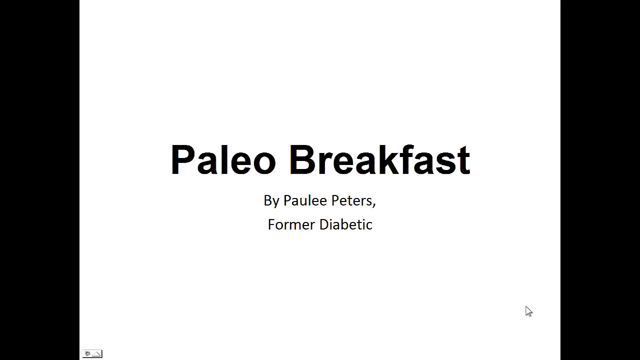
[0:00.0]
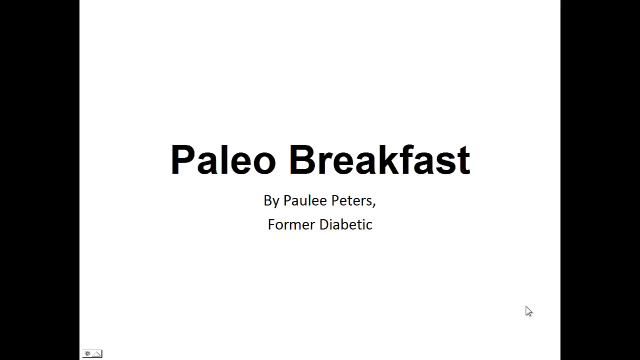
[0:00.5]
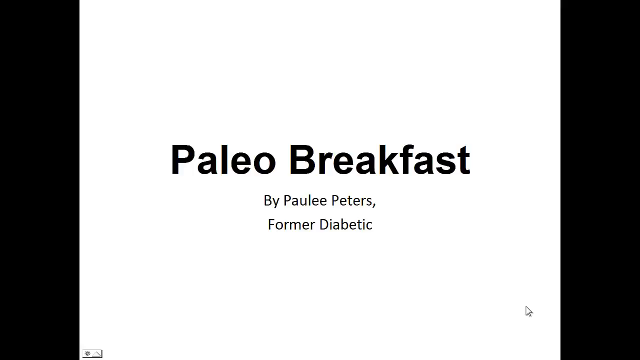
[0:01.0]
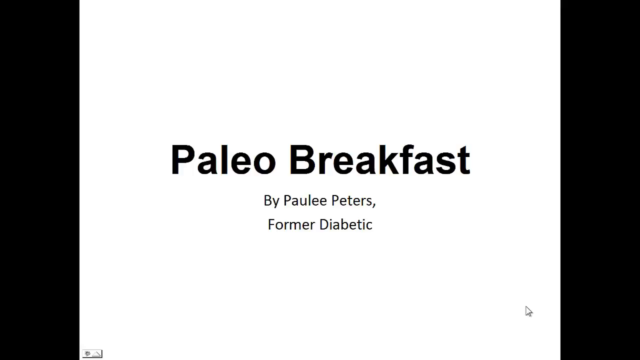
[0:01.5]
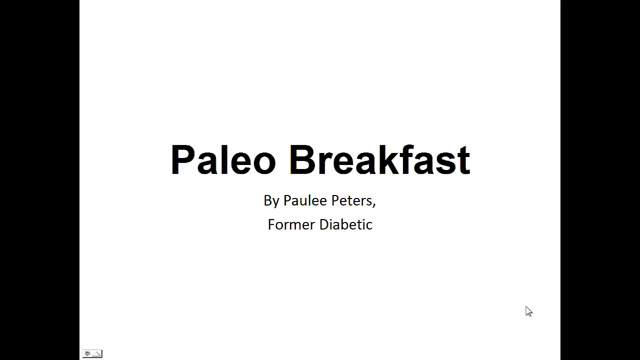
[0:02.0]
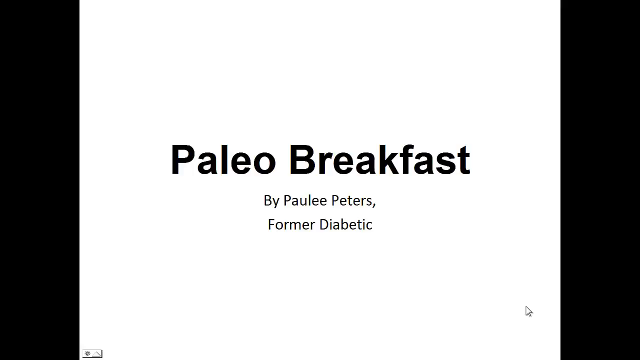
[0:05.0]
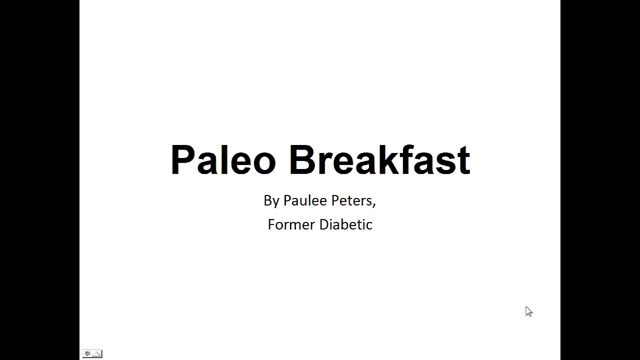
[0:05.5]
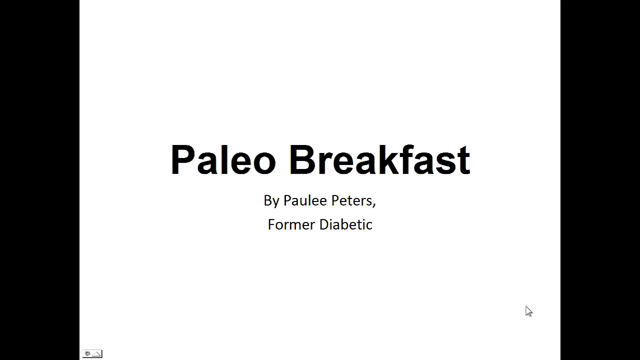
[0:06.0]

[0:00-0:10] Bold text reads "Paleo breakfast", followed by "by Paulee Peters", and under the name the words "former diabetic", neither in bold. The text is on a white background, and the screen looks like it is minimized, with a black background behind the white one. A white cursor is at the bottom right. A small rectangular box is in the bottom left corner, apparently containing a home sign with what looks like a recycling sign on the side.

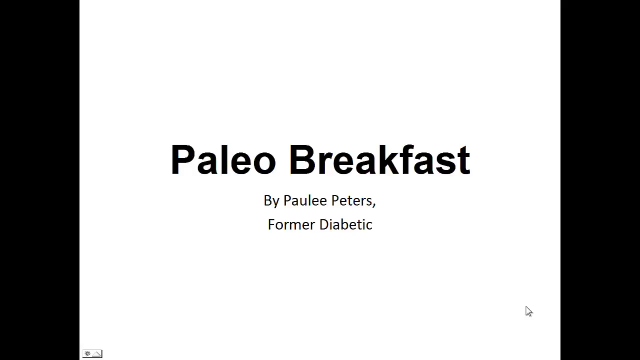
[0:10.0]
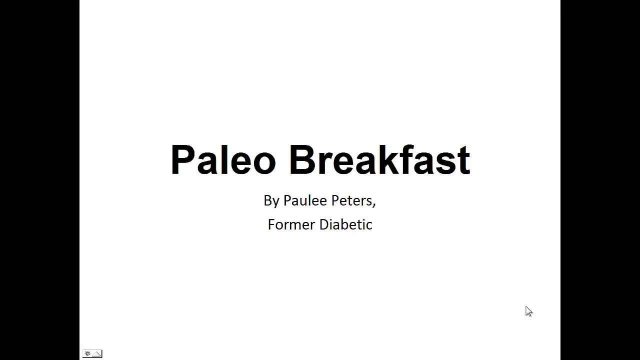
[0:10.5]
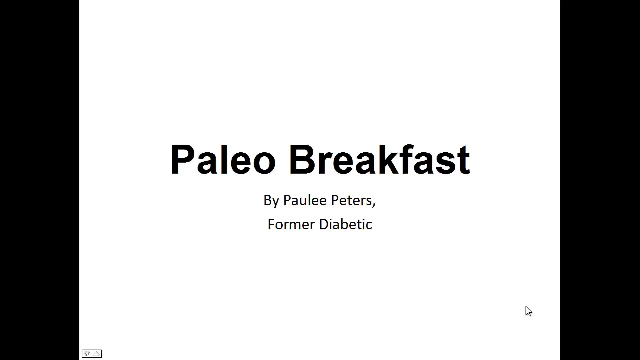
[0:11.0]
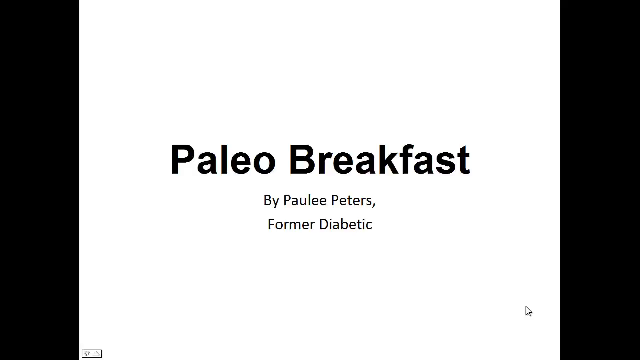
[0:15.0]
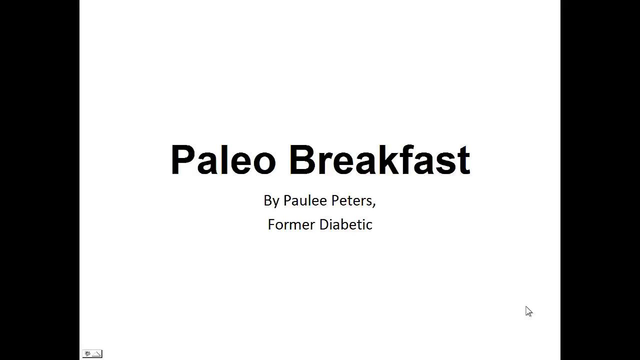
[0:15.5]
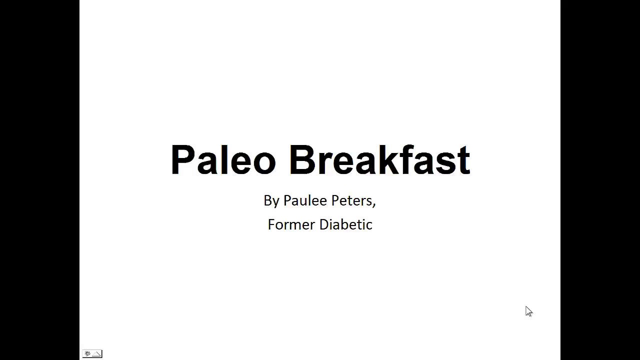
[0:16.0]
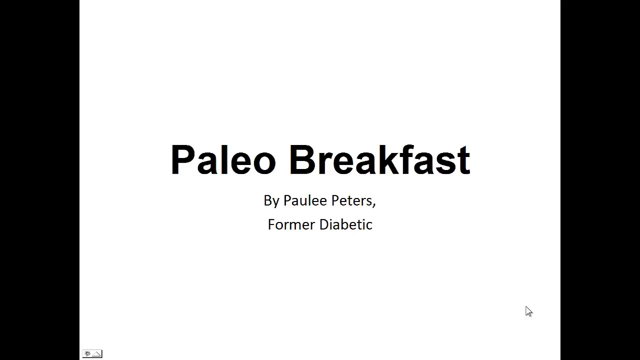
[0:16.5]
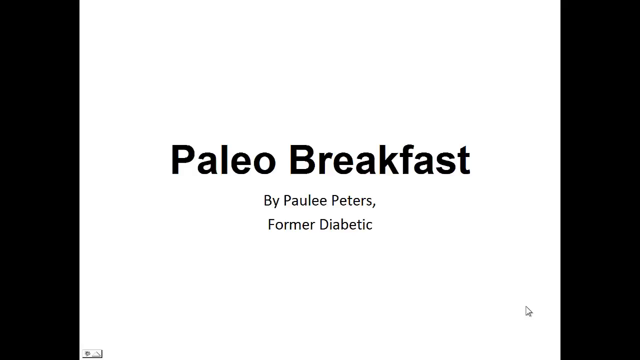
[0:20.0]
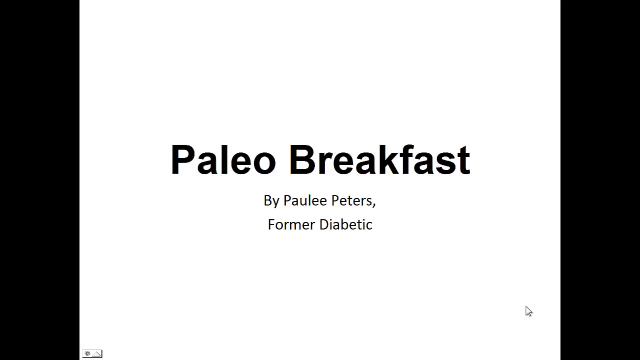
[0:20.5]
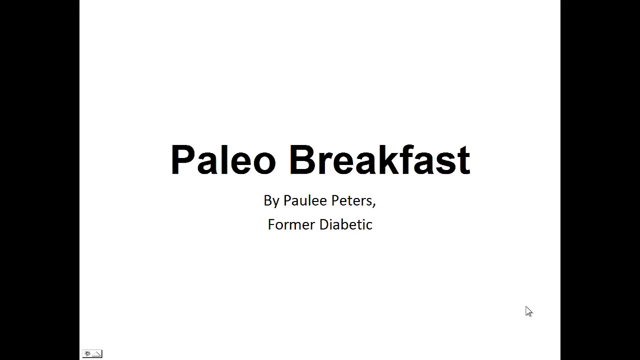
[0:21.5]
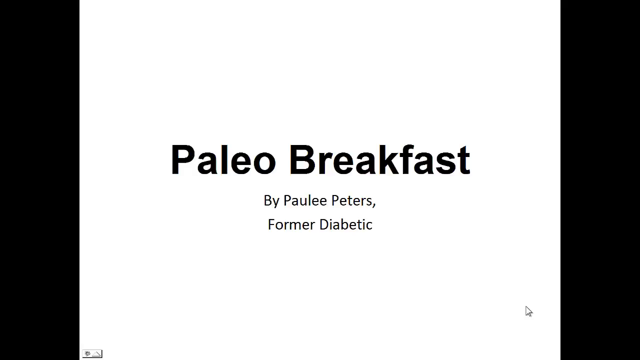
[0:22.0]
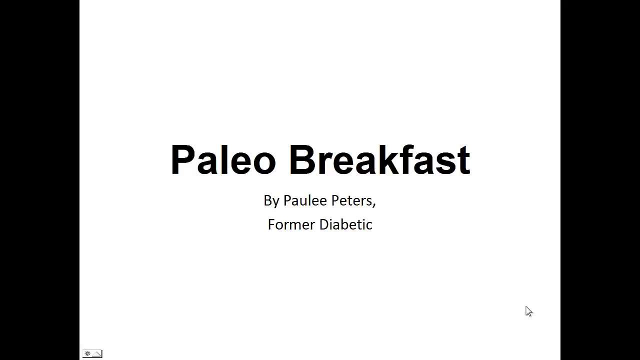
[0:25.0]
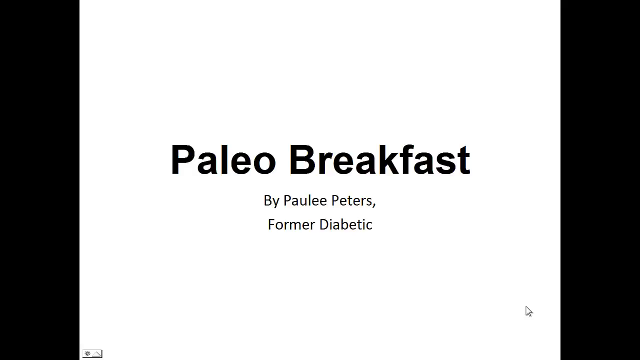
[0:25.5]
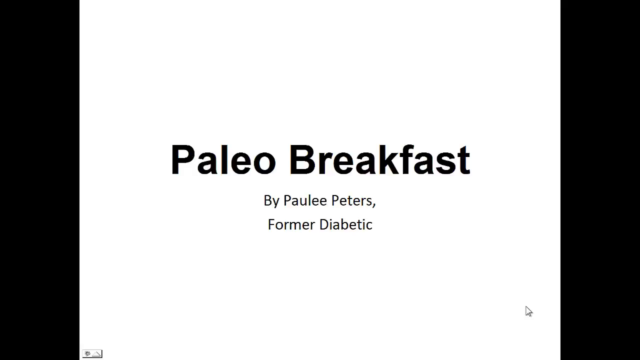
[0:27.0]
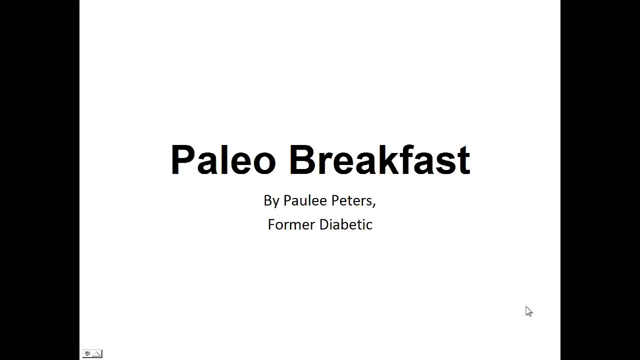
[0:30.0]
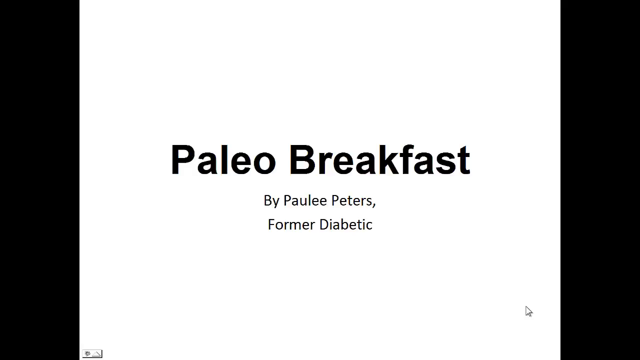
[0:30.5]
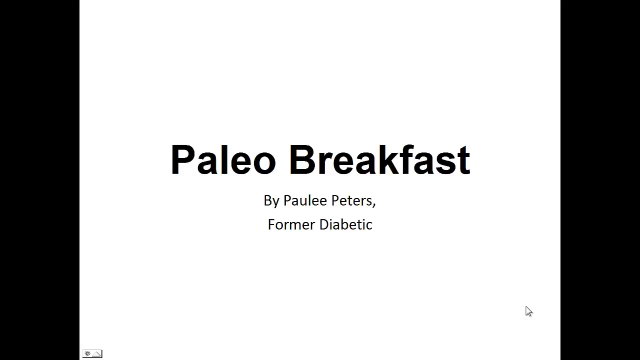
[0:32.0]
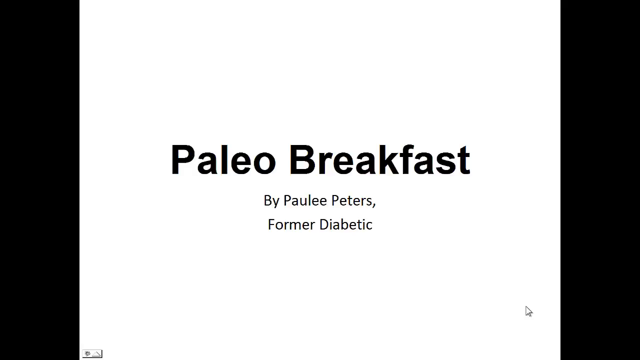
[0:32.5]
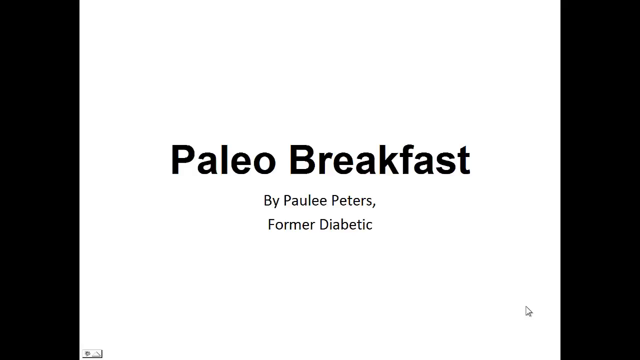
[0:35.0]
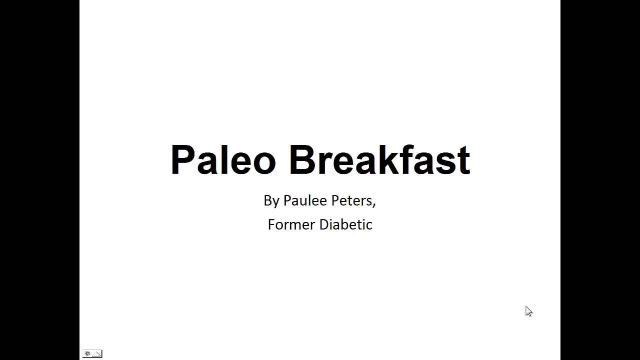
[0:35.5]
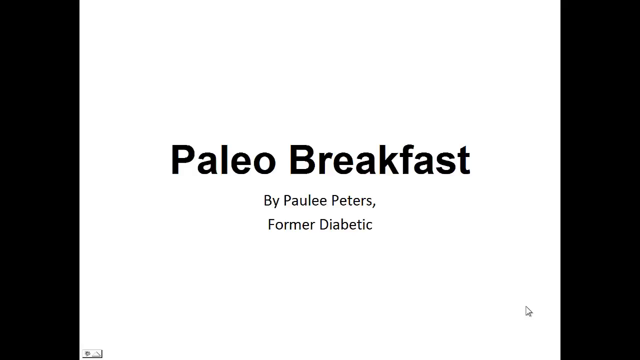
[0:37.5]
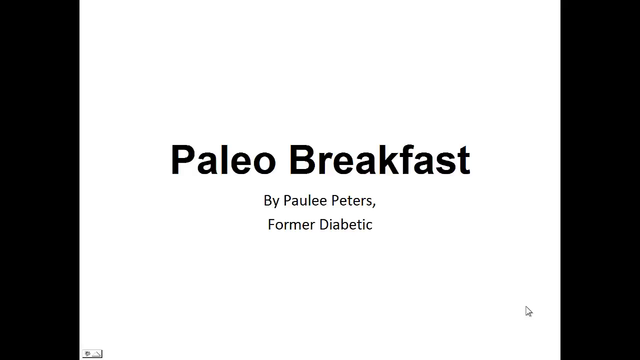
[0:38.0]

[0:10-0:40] A white screen has a black background, and the screen looks a little minimized. In the center, bold black words read "paleo breakfast", followed by "by Paulie Peters, former diabetic" in black, not bold. A white cursor is at the bottom right of the screen, and in the bottom left corner there is a rectangle shape that seems to have some icons inside. The font looks like a normal font, and the video is in black and white. The screen is rectangular, and the white part is a square, since both sides look equal; the wording is at the center of that white square.